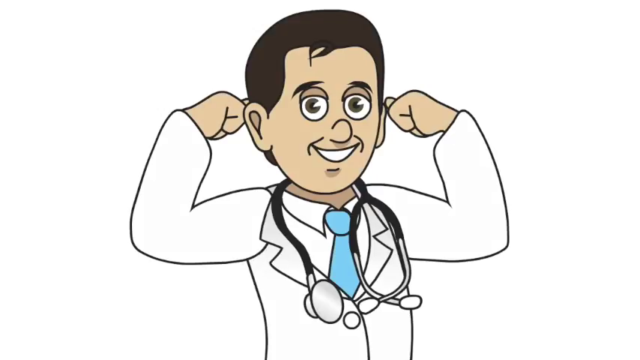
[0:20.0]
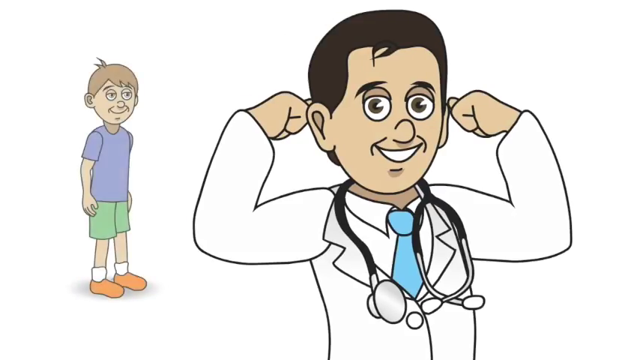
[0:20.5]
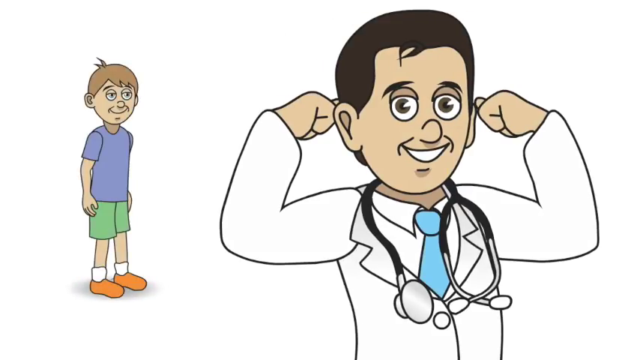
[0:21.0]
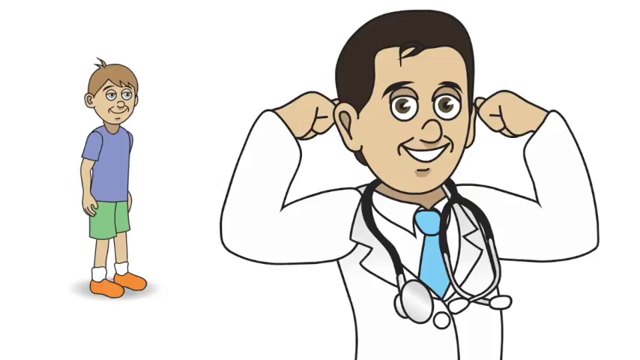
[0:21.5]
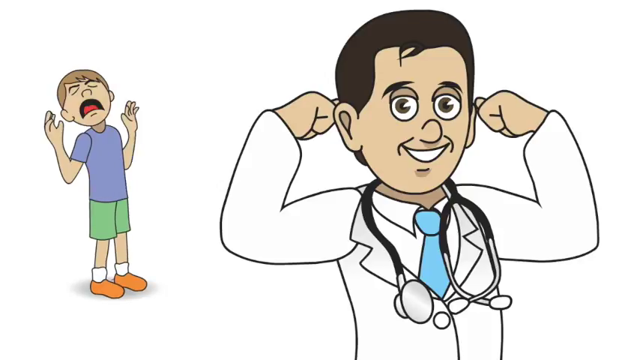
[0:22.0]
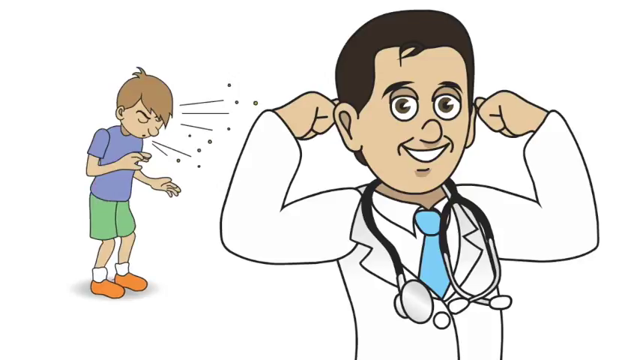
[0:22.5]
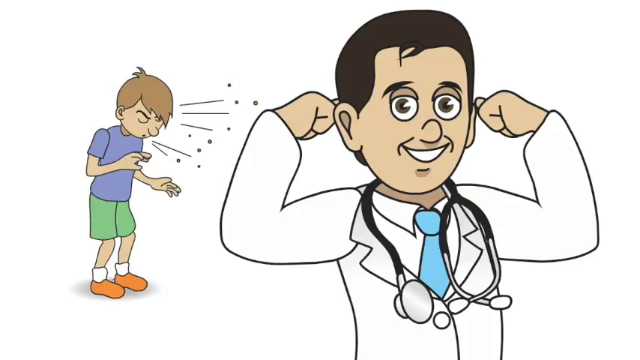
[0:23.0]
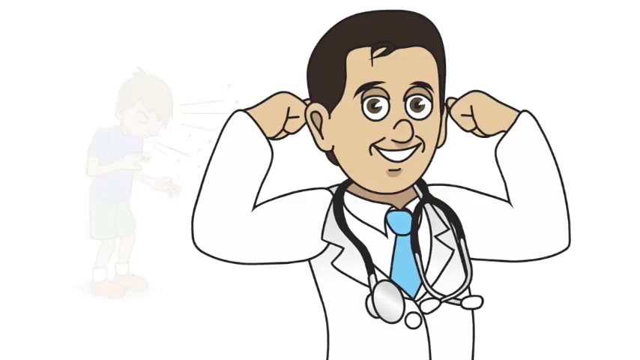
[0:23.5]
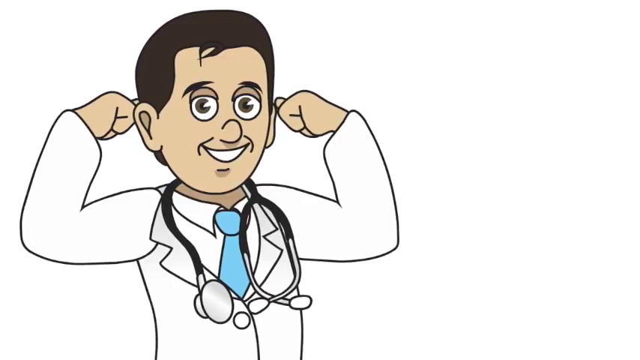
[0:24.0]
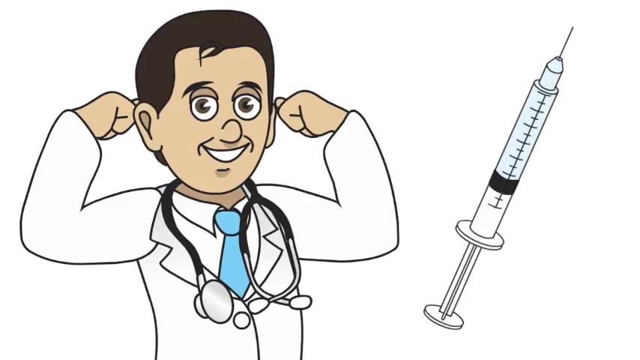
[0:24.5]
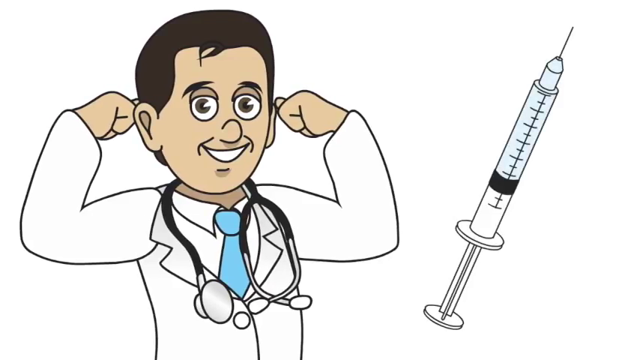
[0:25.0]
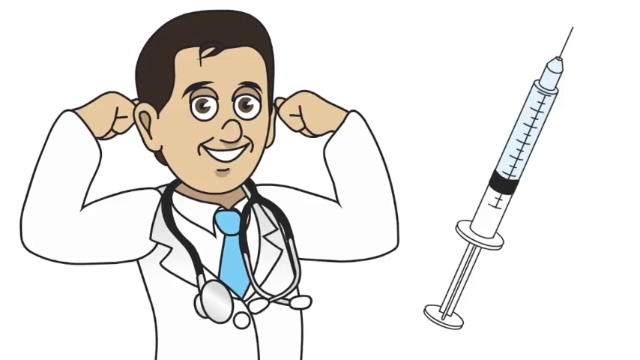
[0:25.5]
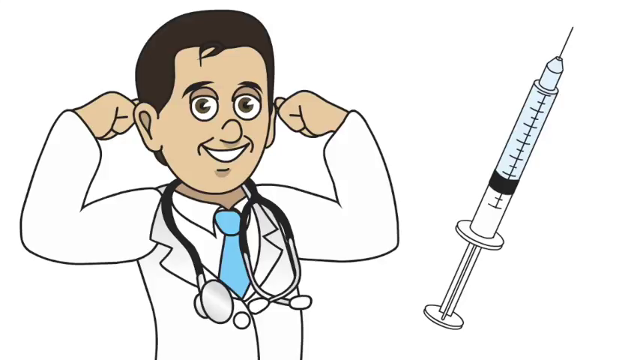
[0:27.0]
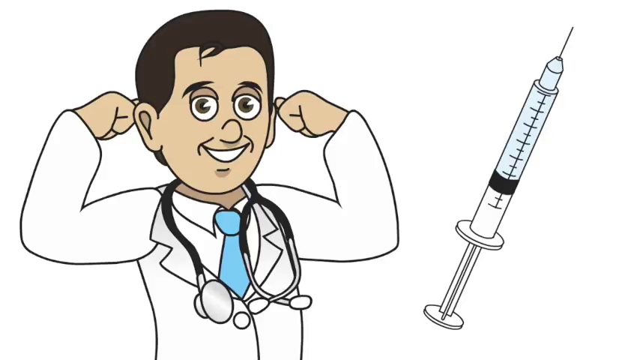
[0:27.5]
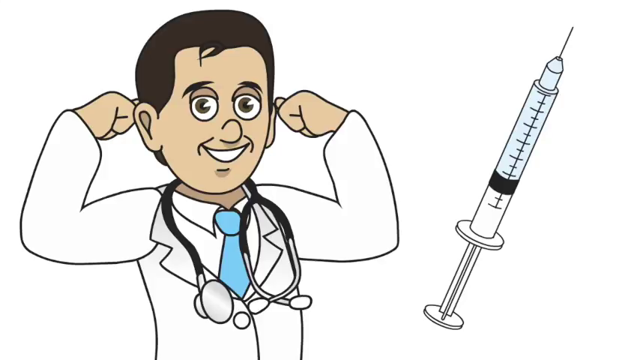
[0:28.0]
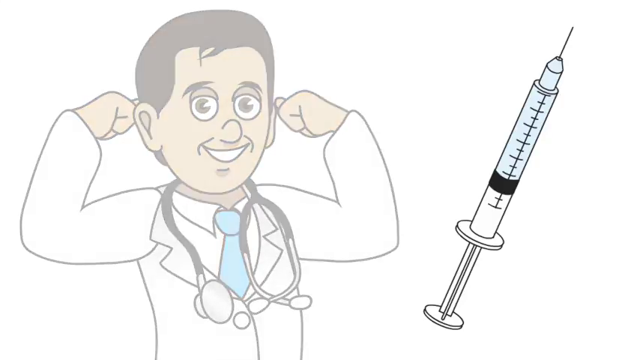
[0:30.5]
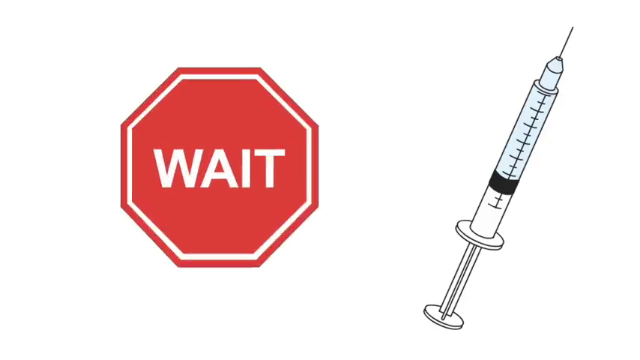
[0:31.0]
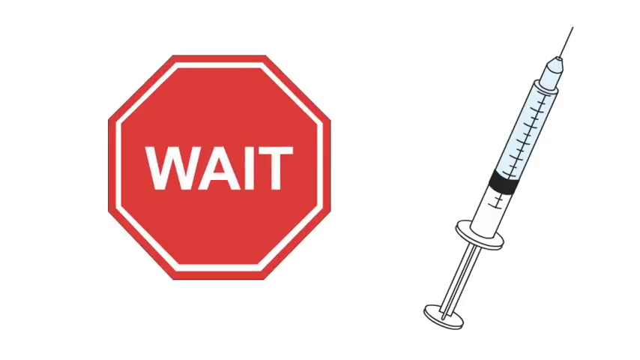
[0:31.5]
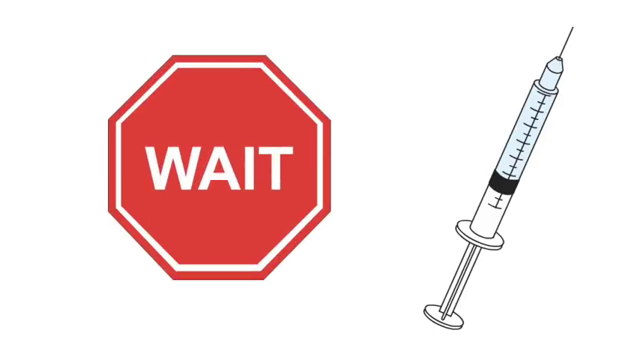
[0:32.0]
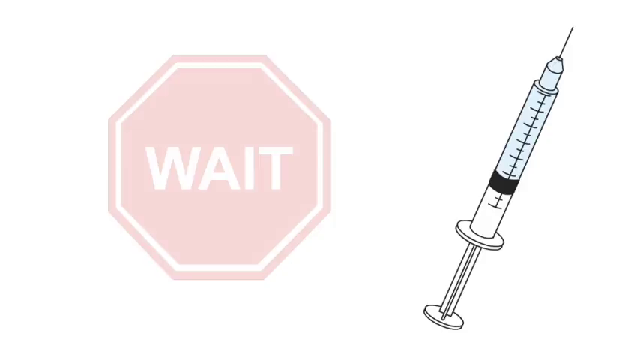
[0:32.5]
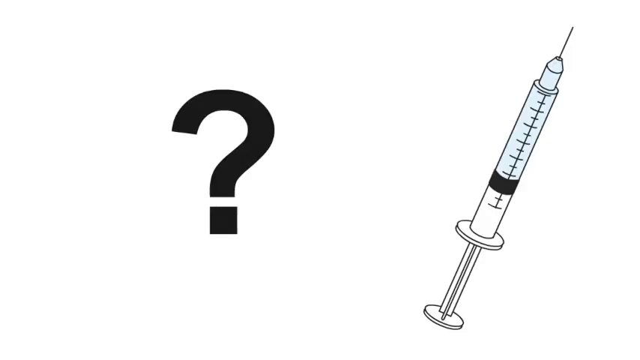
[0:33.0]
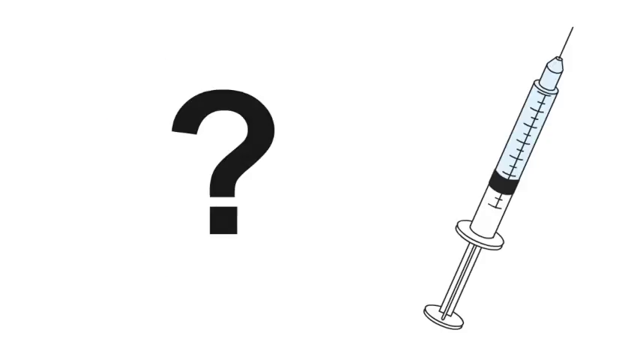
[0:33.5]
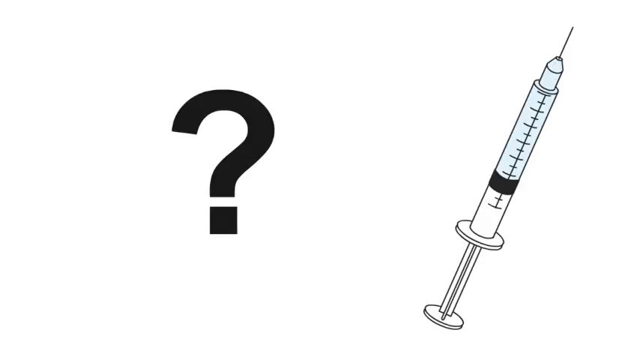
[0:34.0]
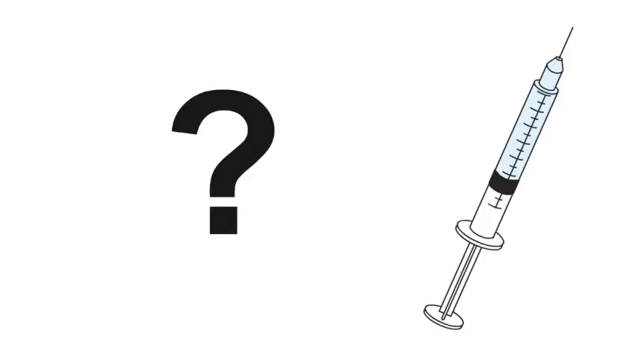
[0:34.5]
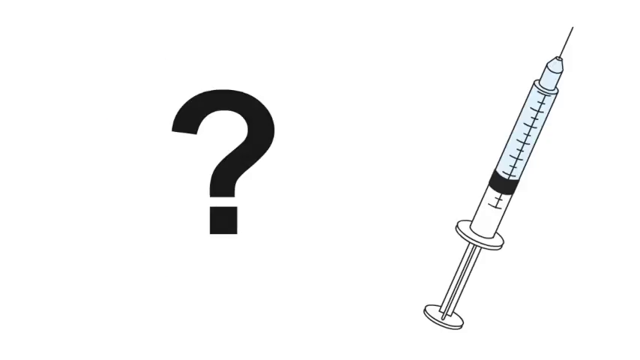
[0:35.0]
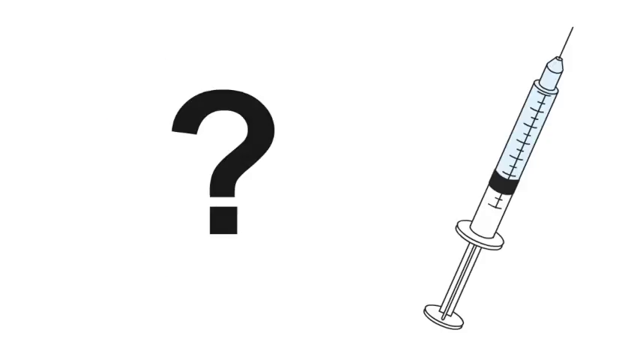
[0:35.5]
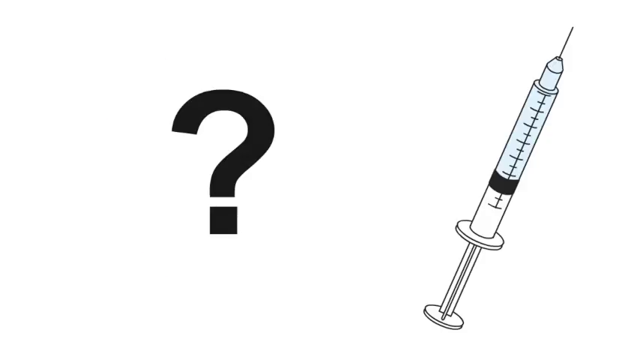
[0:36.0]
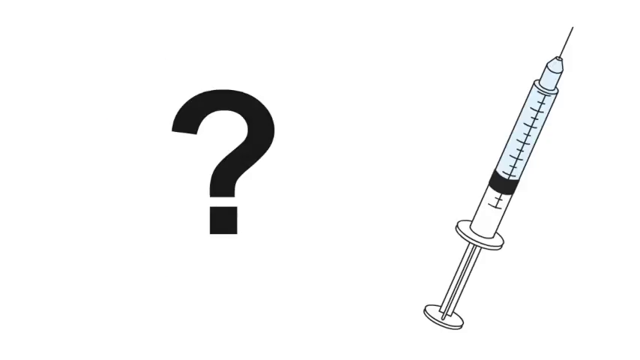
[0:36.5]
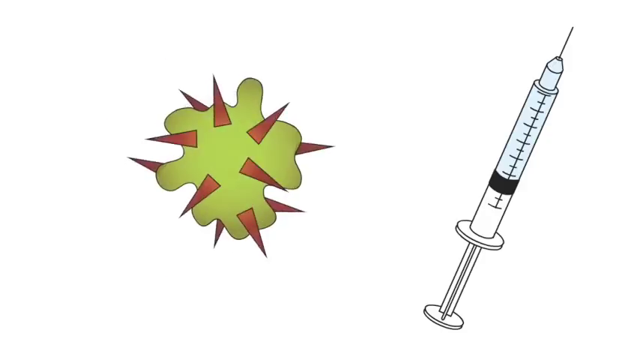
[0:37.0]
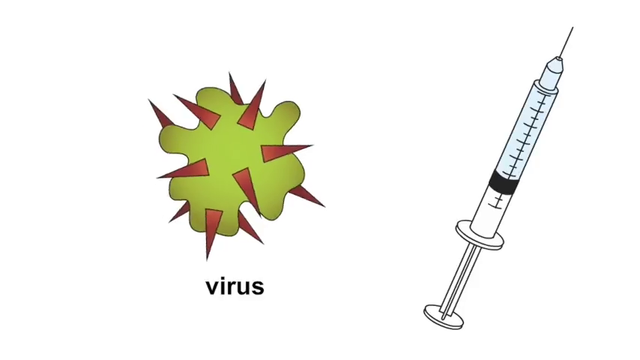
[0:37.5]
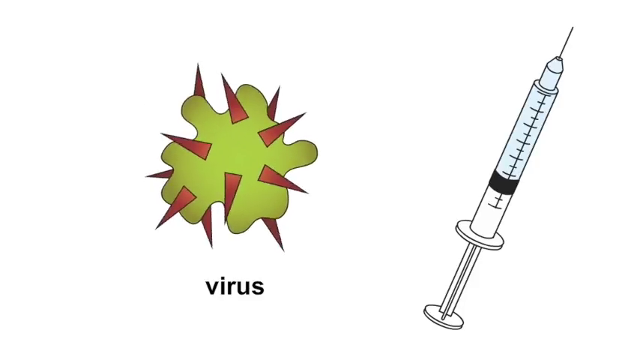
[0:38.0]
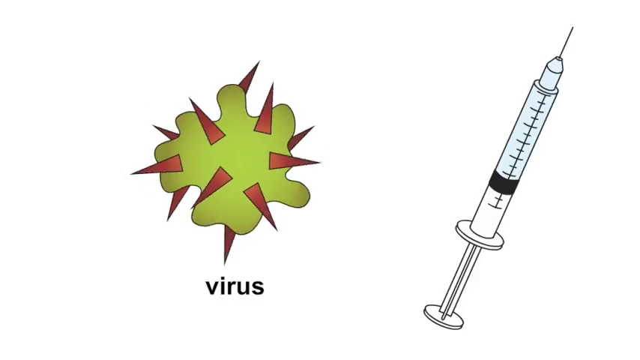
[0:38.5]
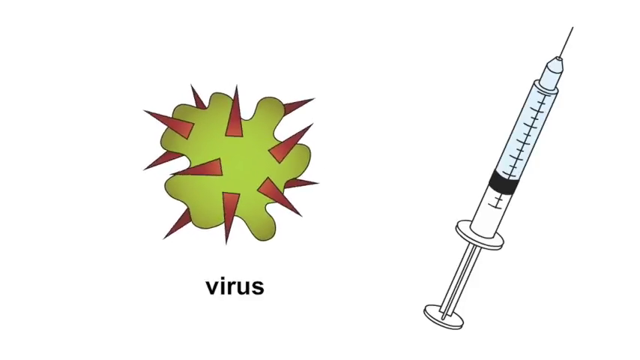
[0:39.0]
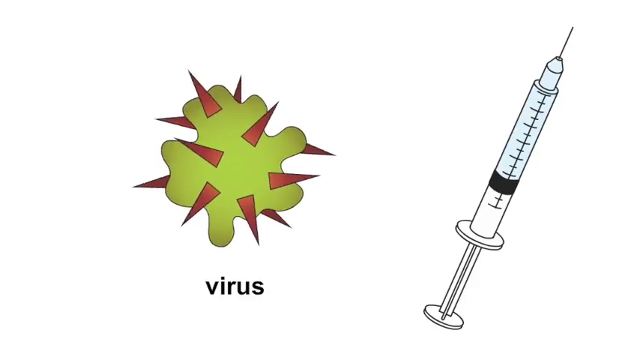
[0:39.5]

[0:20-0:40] In this animation, a doctor in a lab coat has his arms up in the air, flexing his muscles as if giving a victory sign or celebrating a victory. A young boy appears next to him, sneezes, and disappears, and an animated hypodermic needle appears on the right of the screen next to the image of the doctor. The doctor's image disappears, and a large red octagon with the word "WAIT" in the center appears next to the hypodermic needle. It disappears and a black question mark appears in its place. The question mark then disappears, and a floating green blob with a lot of brown spikes coming out of it appears in its place, labeled "virus" at the bottom of the screen.